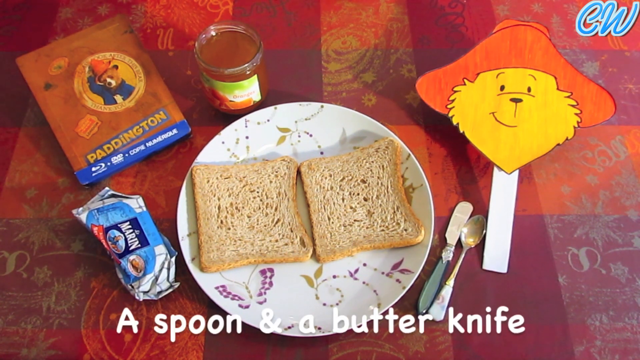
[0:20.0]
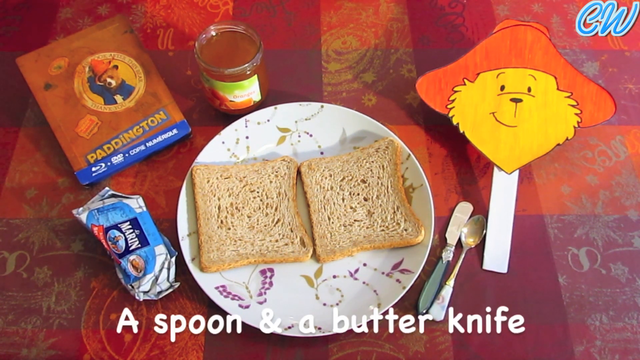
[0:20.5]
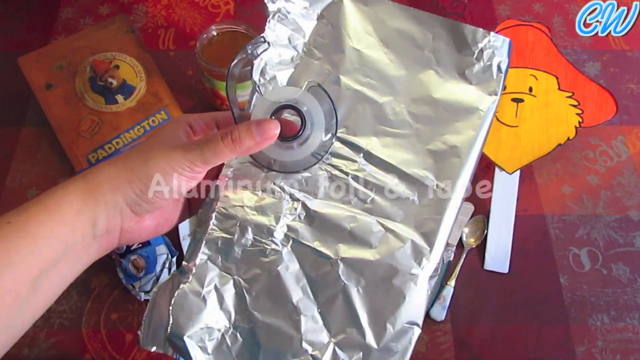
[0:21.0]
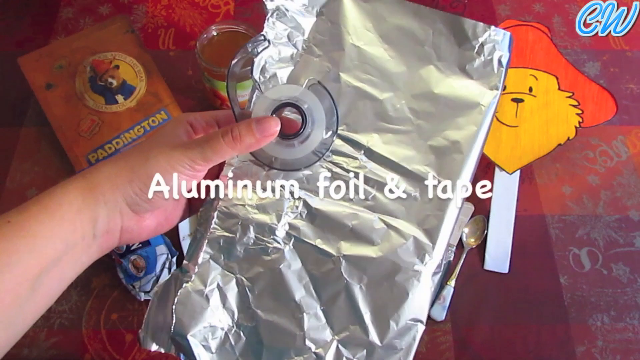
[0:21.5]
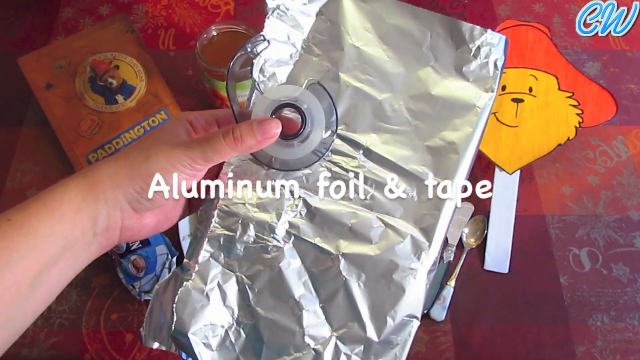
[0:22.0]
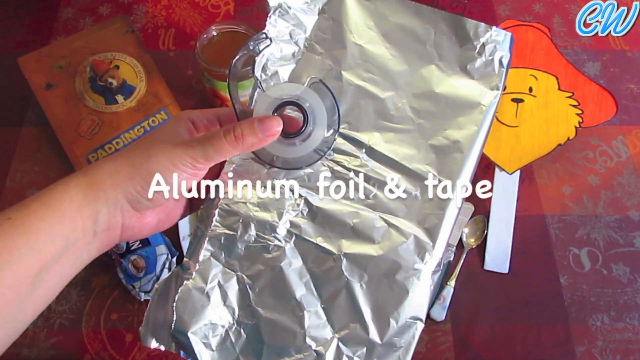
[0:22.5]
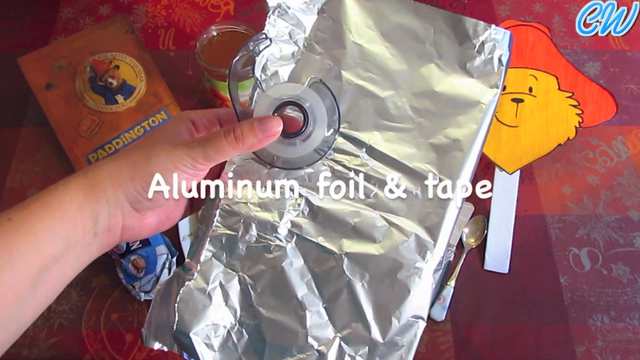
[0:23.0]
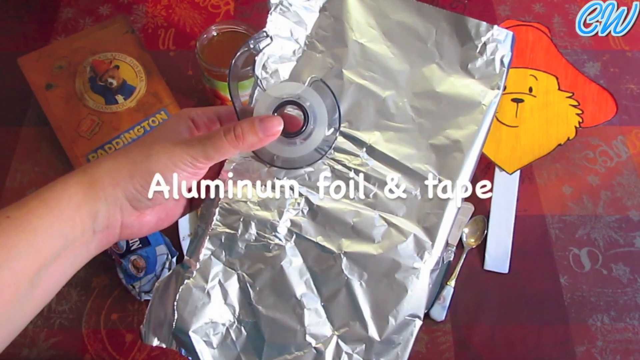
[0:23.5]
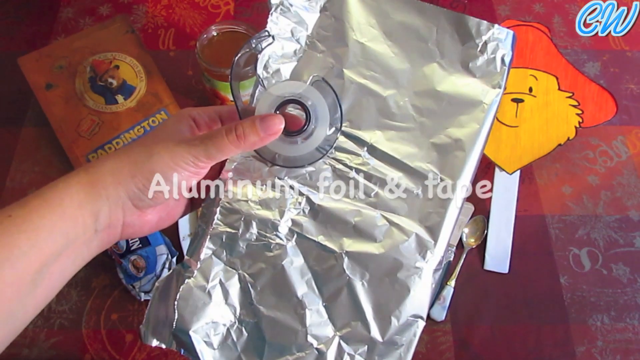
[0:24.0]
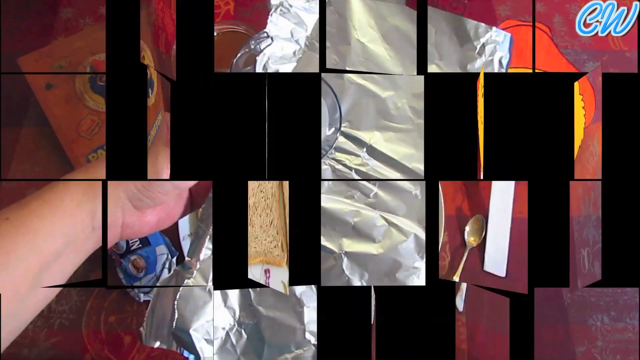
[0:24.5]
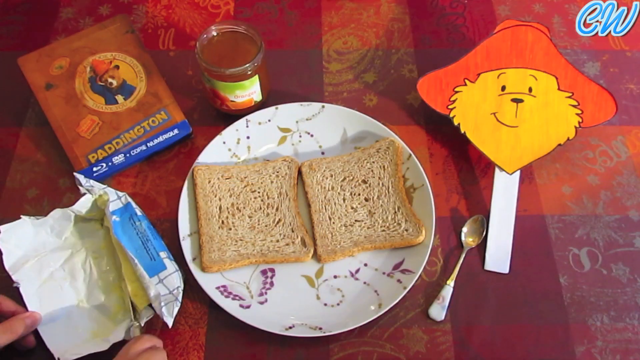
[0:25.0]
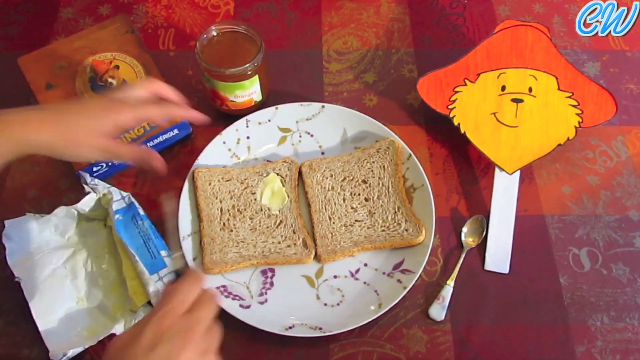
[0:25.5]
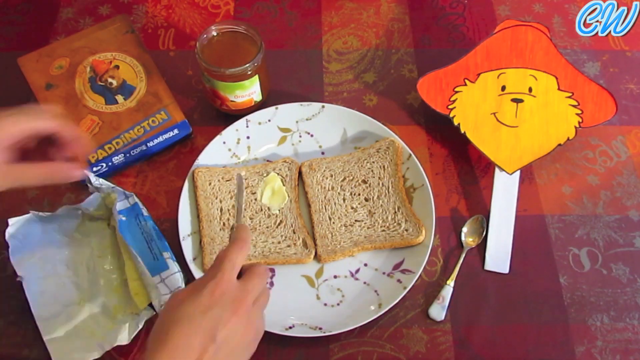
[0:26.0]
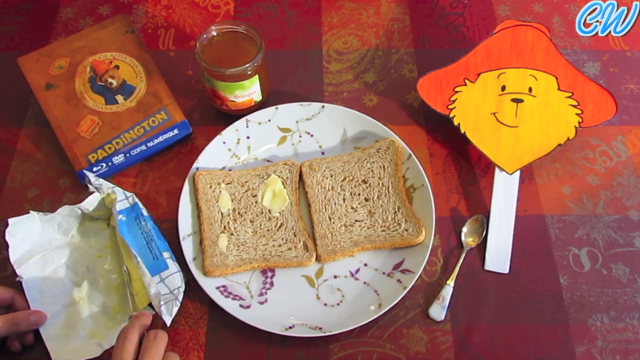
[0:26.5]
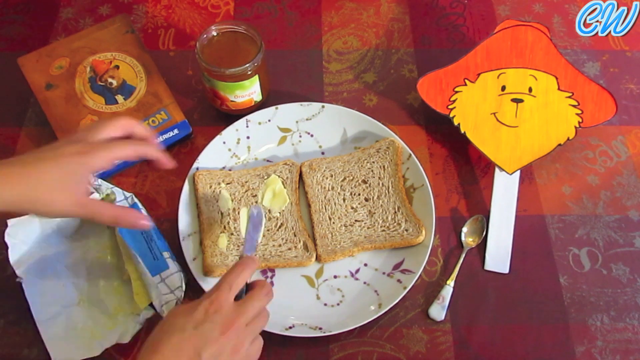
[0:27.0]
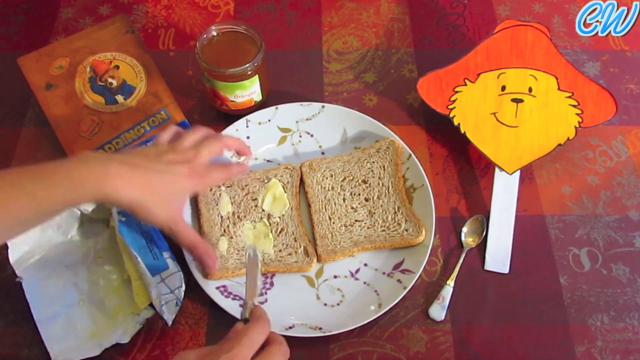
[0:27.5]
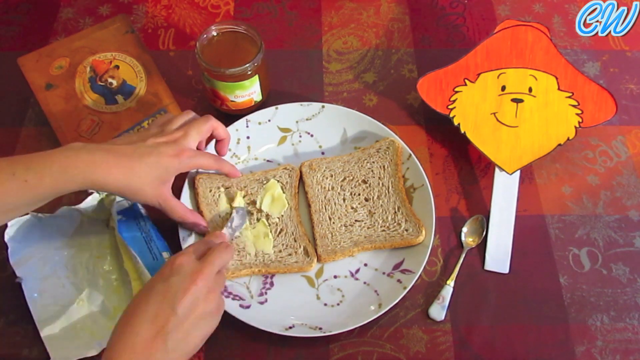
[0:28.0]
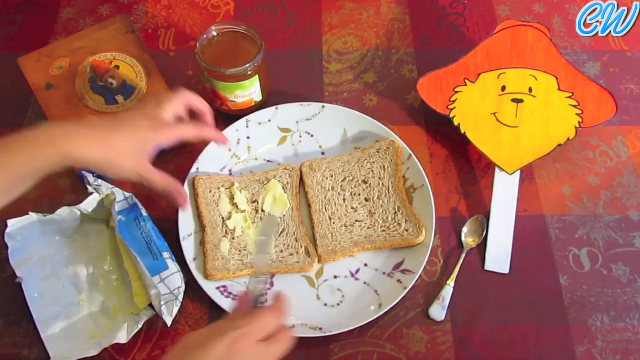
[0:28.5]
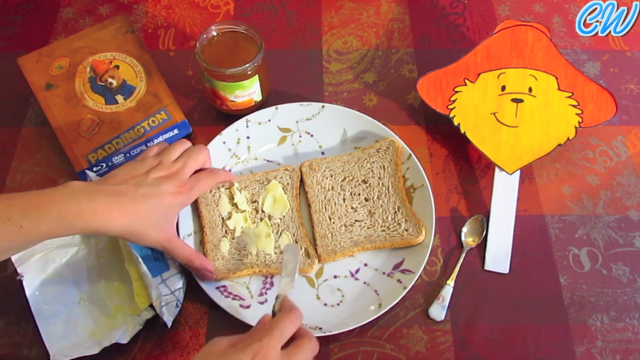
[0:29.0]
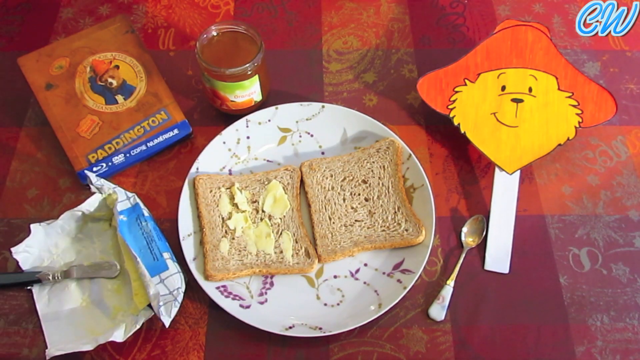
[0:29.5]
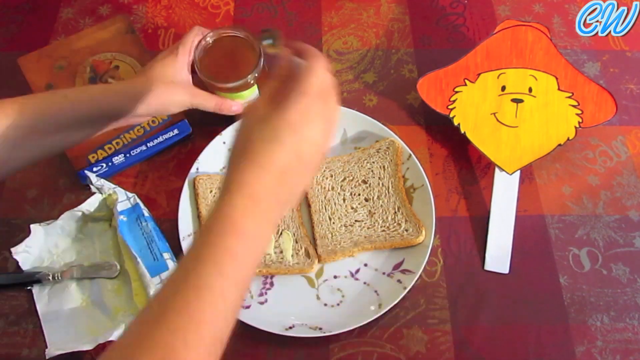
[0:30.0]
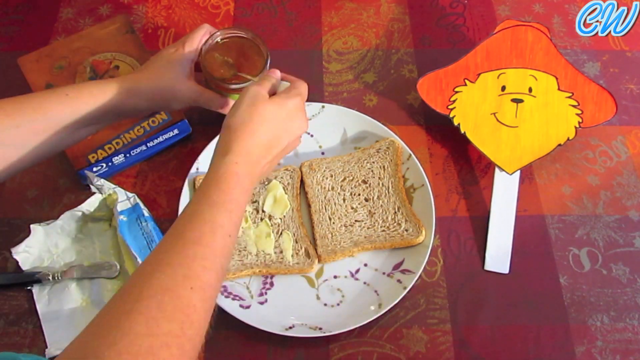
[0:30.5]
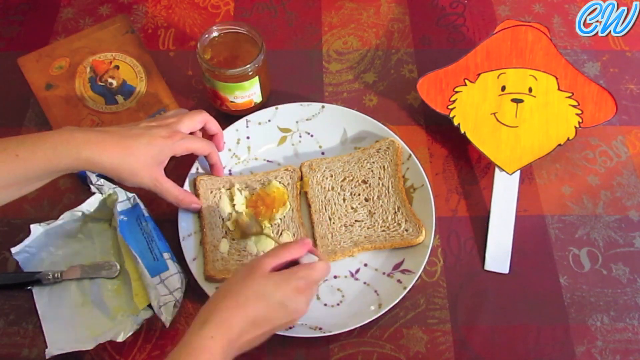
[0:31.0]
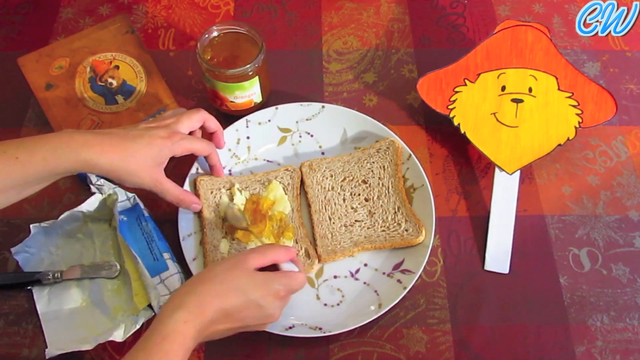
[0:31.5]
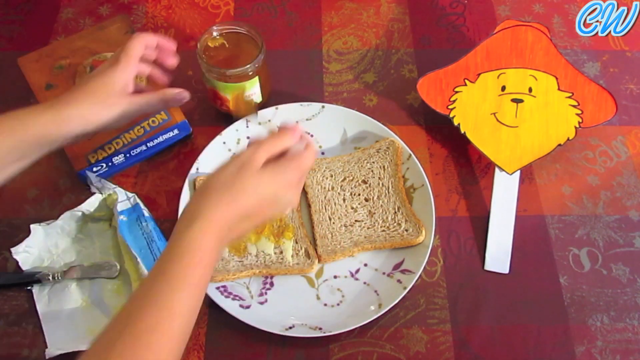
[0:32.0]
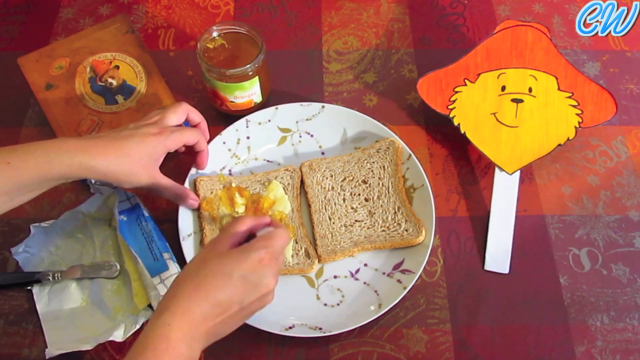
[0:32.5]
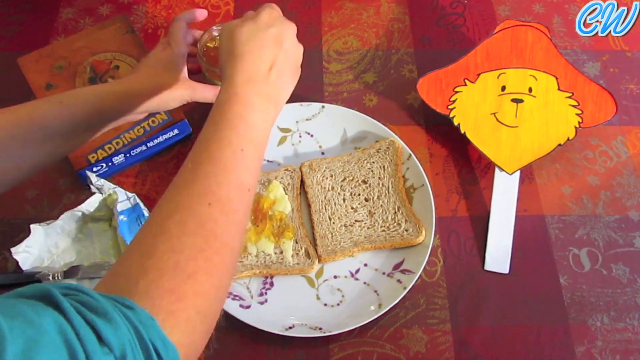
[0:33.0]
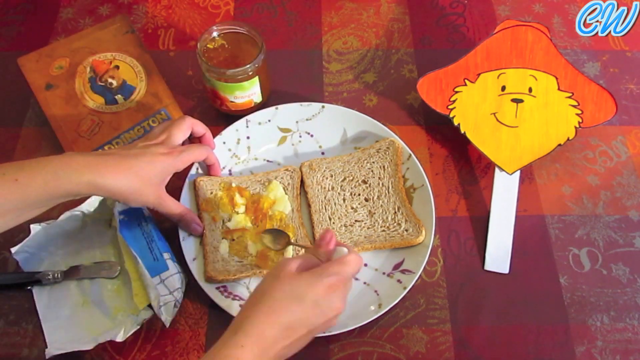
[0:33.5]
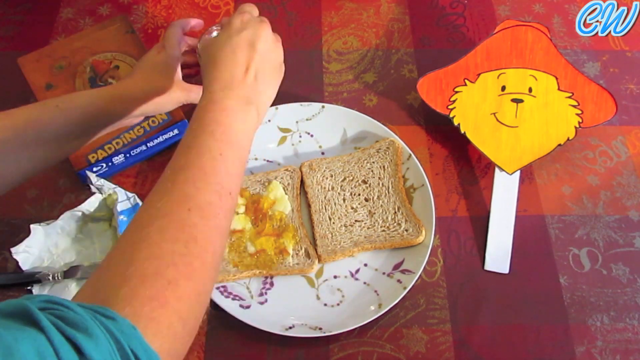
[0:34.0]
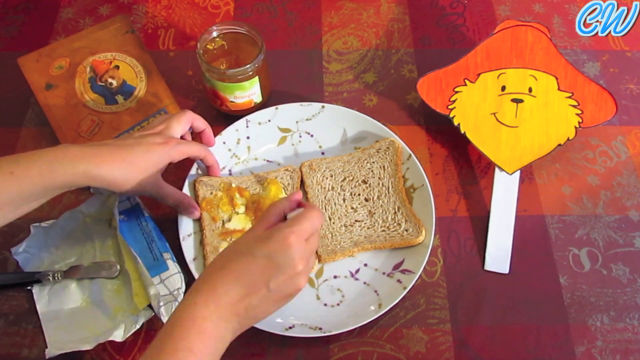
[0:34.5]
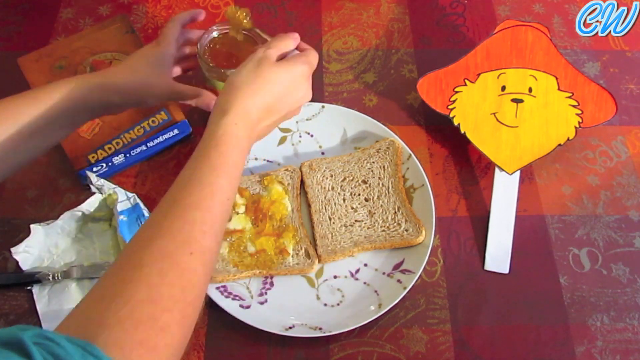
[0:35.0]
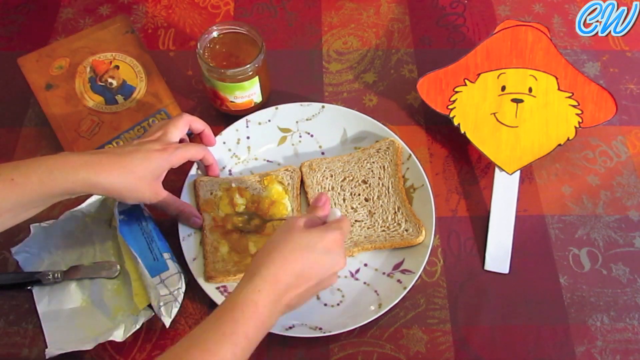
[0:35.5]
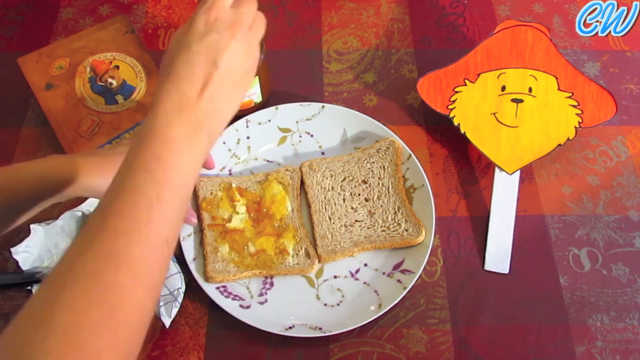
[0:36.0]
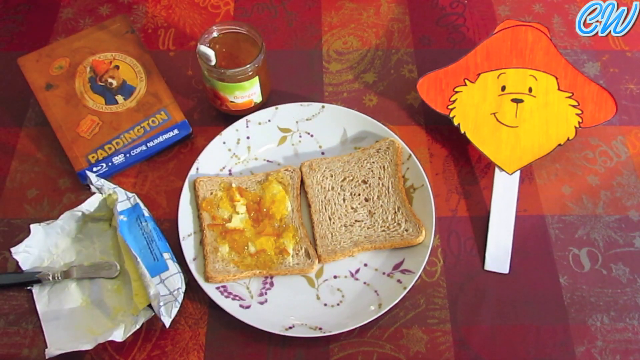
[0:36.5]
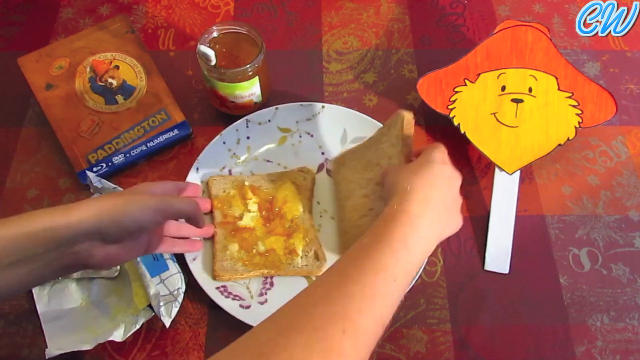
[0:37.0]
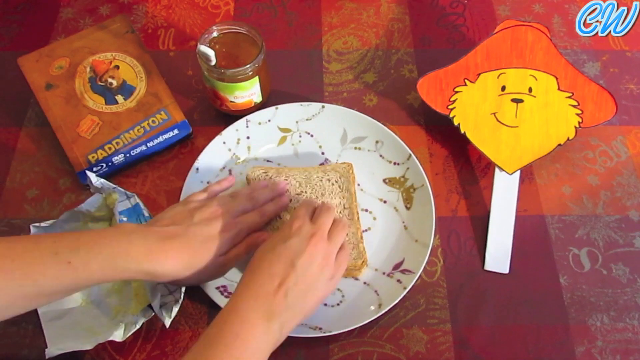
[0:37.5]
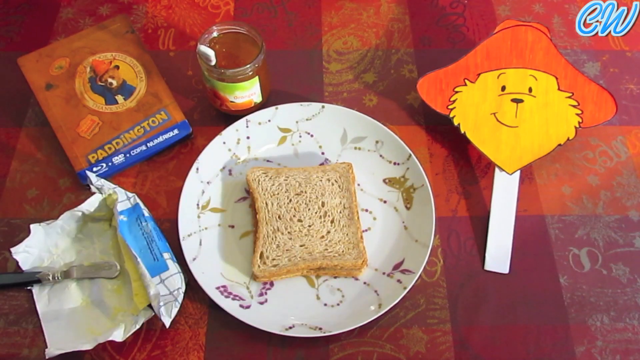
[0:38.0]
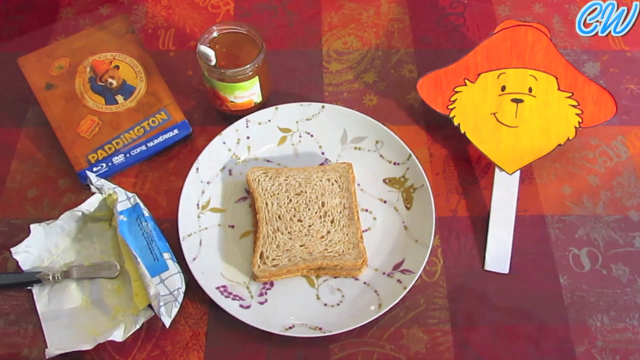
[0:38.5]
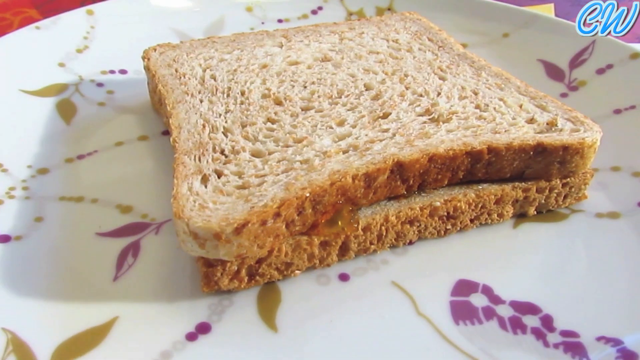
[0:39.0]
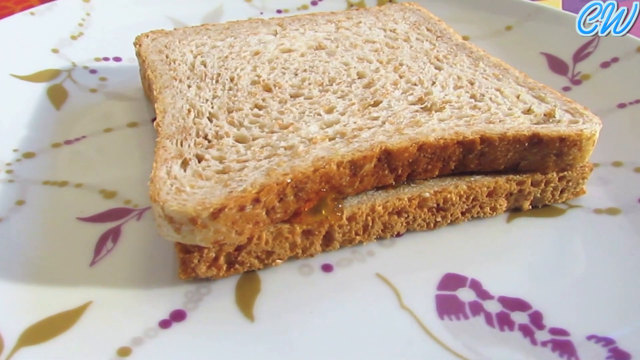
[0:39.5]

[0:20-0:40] The scene begins with the ingredients for a sandwich: two slices of bread, salted butter and marmalade, along with a spoon and knife next to a plate. After a transition, a human hand holds aluminum foil and tape; the foil is folded in half. The hand then spreads butter over one slice of bread and spreads marmalade over the butter. The second piece of bread is folded on top, and a close-up shows the two slices of bread and the ingredients set on top of a plate. While the sandwich is being constructed, a book is on the upper left side of the table with "Paddington" on the front and a bear wearing human clothes. To the right is a wooden stick with a cut-out bear's head on top of it, either glued or taped in place.